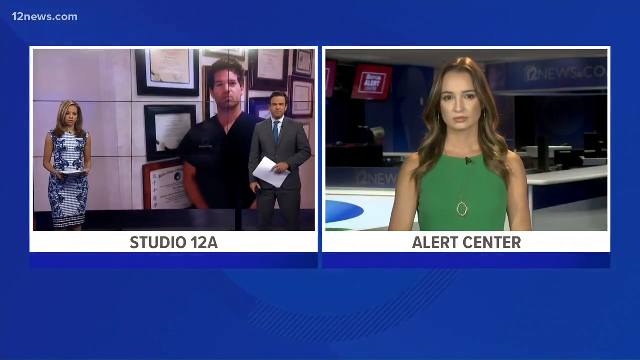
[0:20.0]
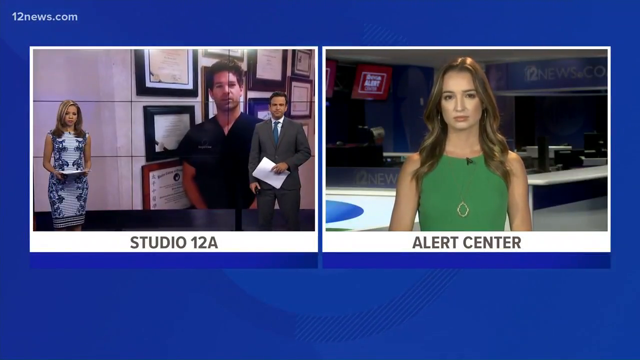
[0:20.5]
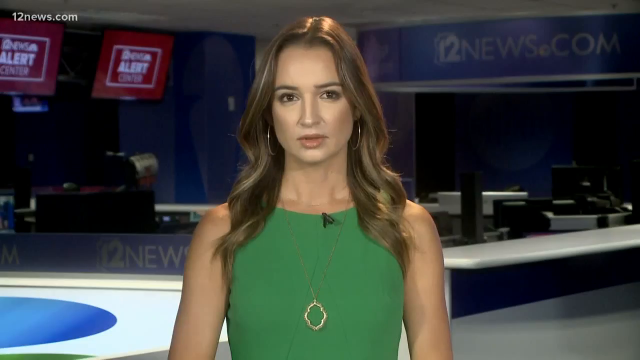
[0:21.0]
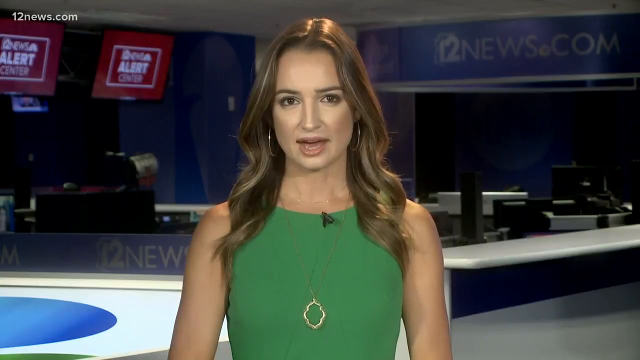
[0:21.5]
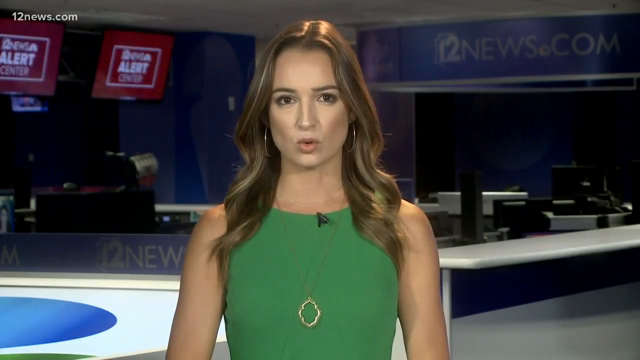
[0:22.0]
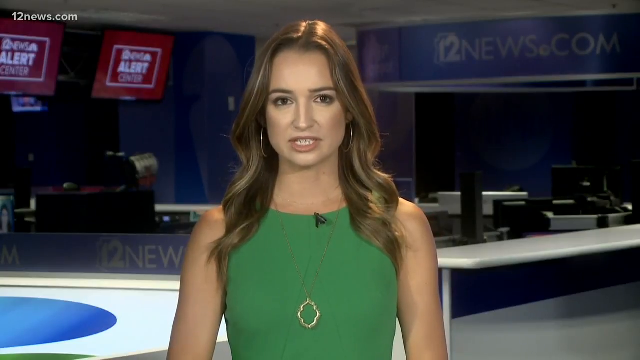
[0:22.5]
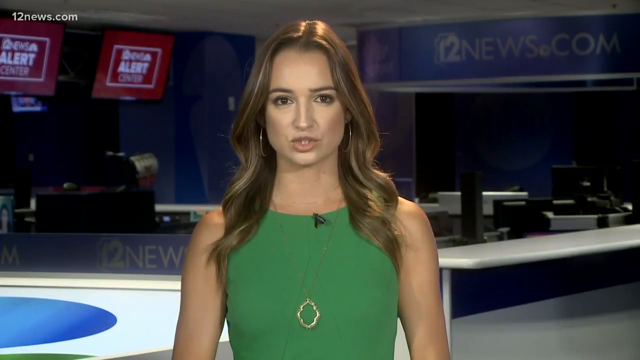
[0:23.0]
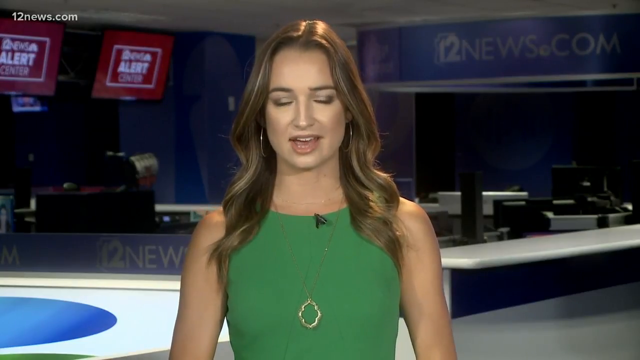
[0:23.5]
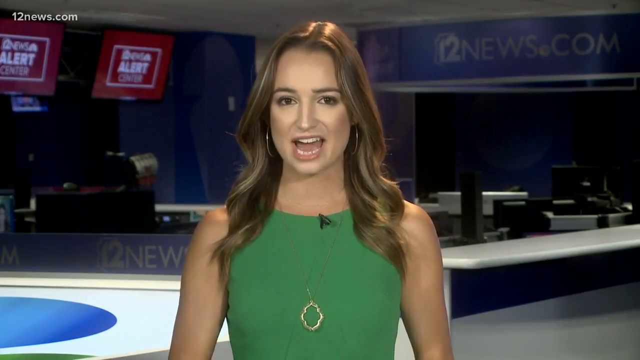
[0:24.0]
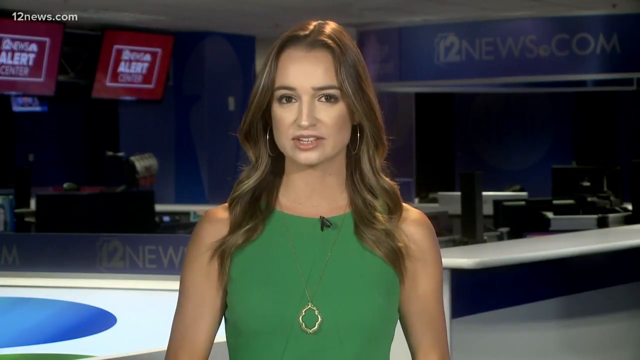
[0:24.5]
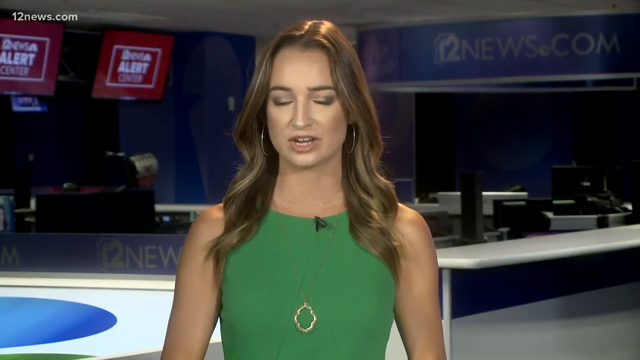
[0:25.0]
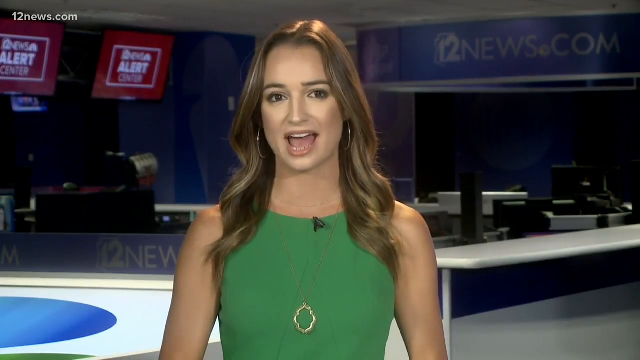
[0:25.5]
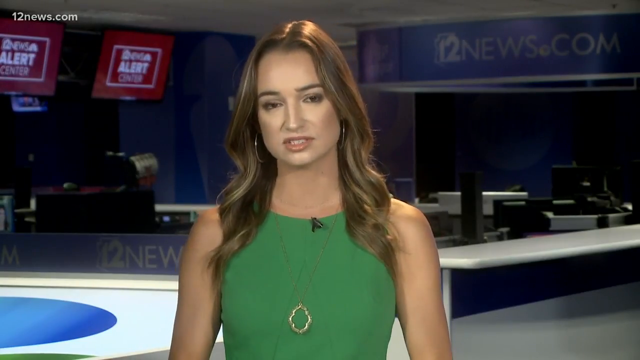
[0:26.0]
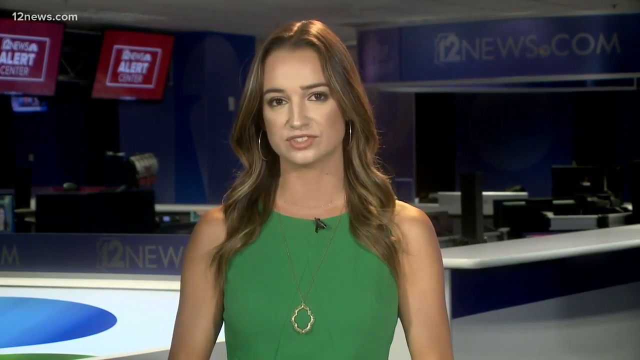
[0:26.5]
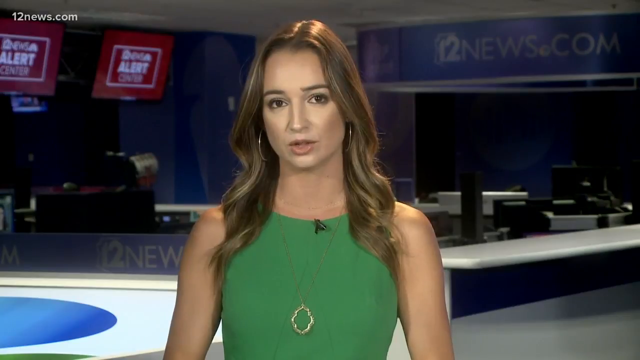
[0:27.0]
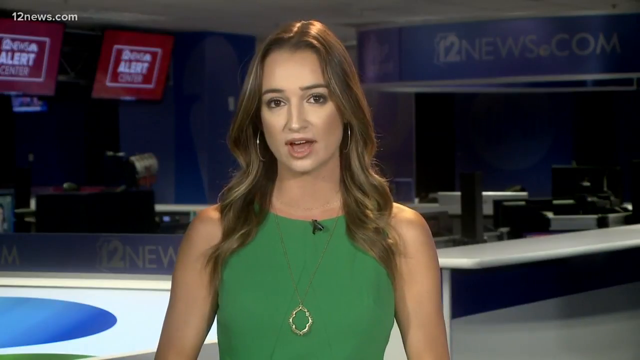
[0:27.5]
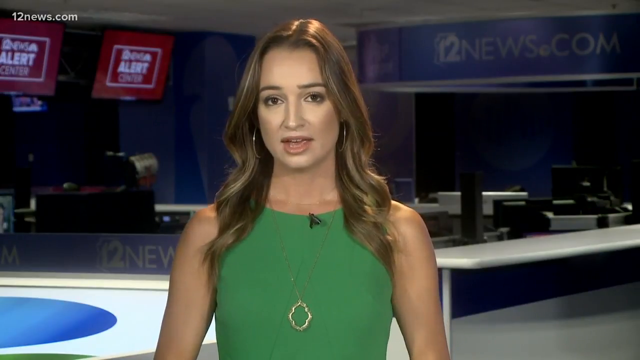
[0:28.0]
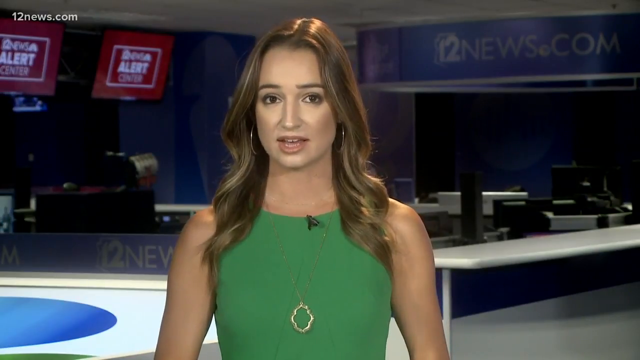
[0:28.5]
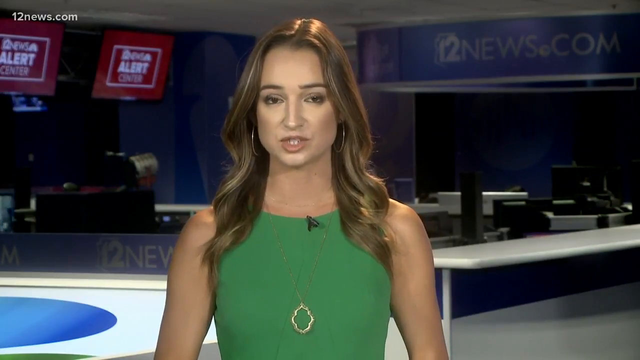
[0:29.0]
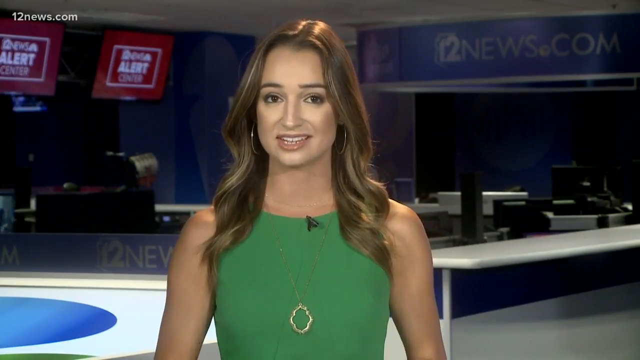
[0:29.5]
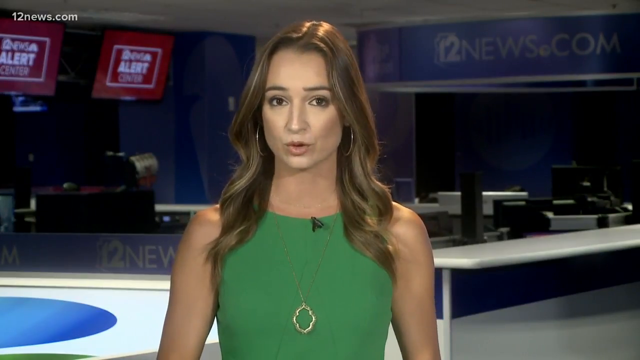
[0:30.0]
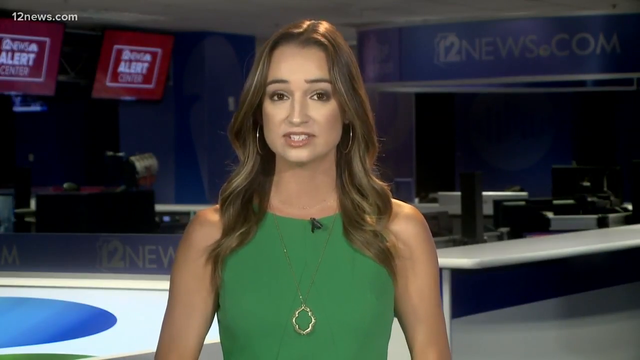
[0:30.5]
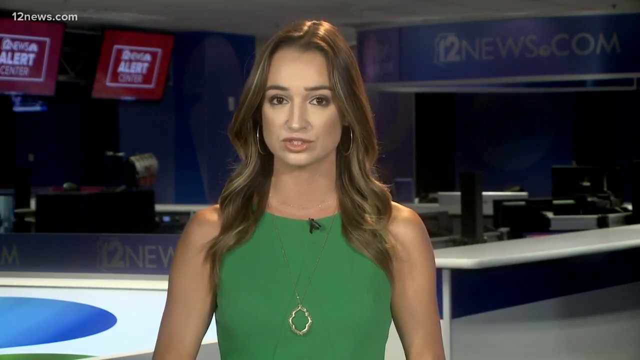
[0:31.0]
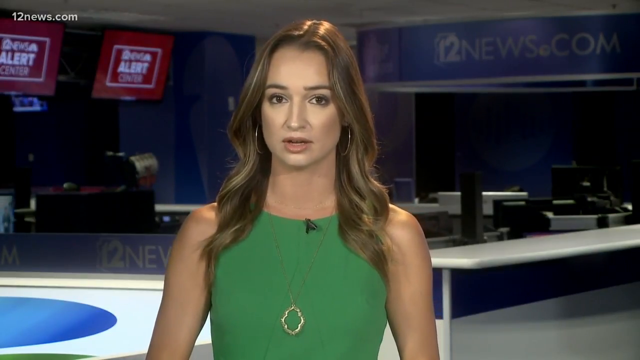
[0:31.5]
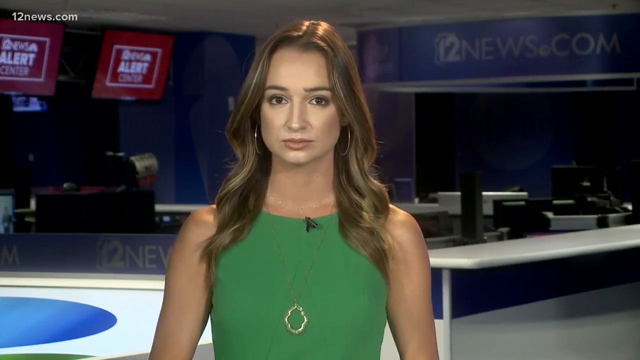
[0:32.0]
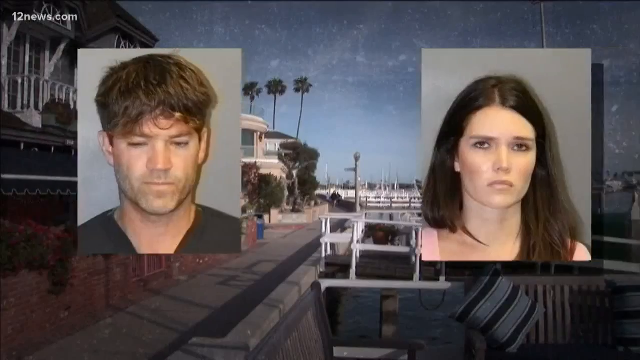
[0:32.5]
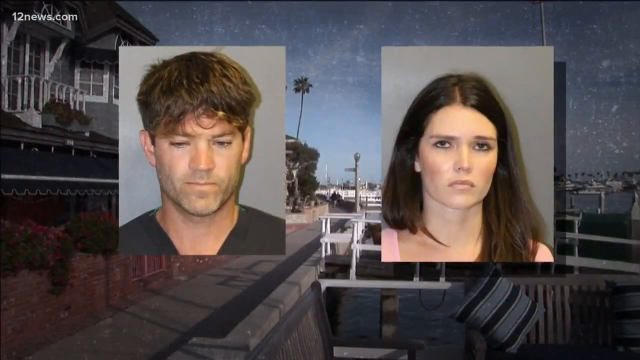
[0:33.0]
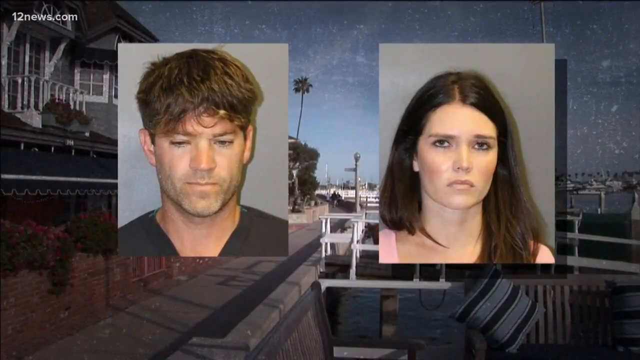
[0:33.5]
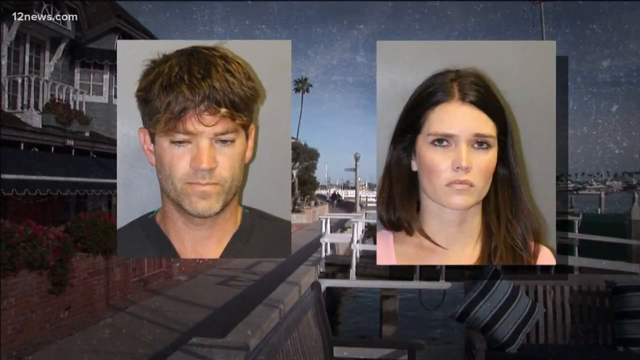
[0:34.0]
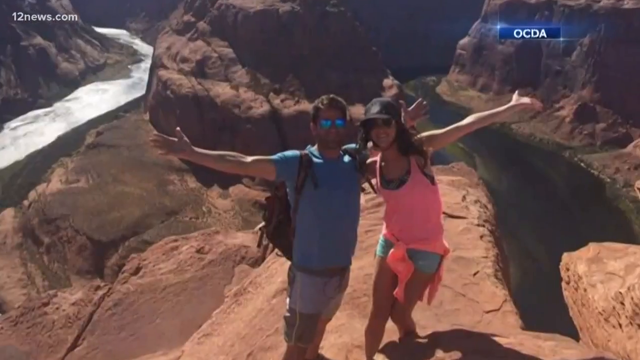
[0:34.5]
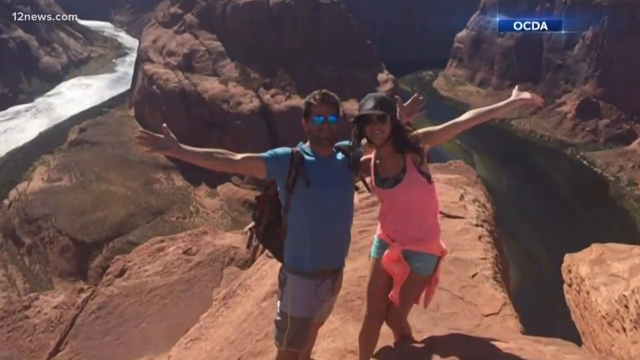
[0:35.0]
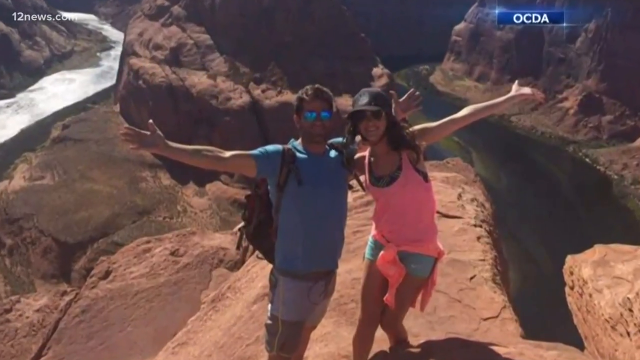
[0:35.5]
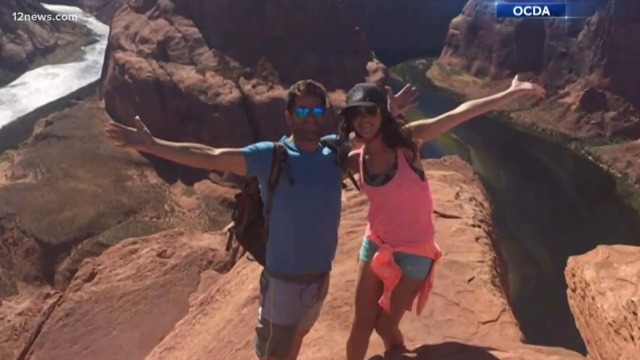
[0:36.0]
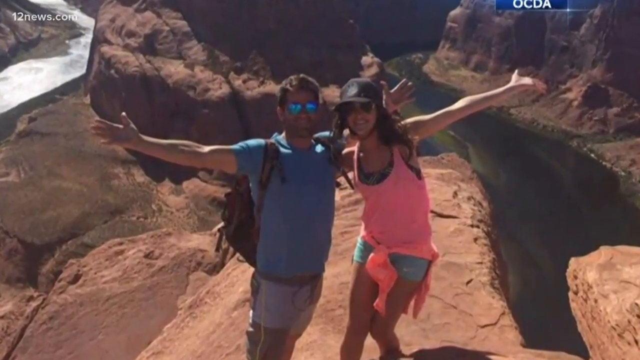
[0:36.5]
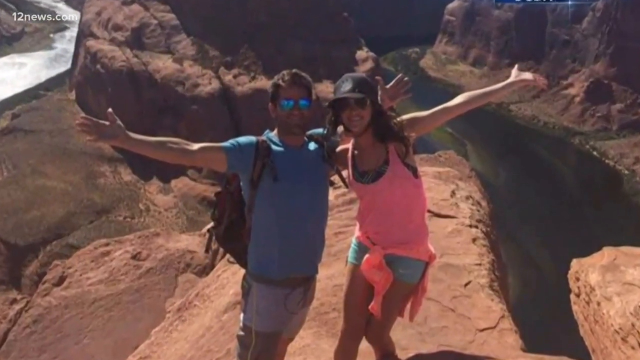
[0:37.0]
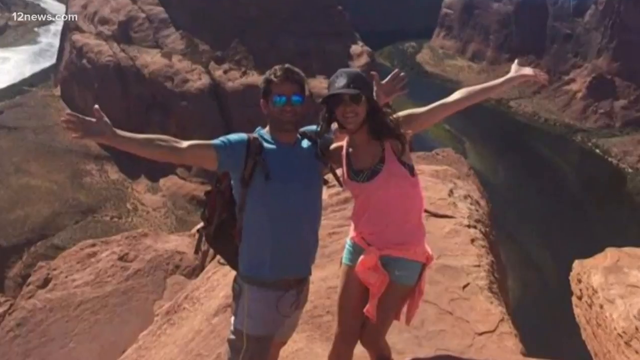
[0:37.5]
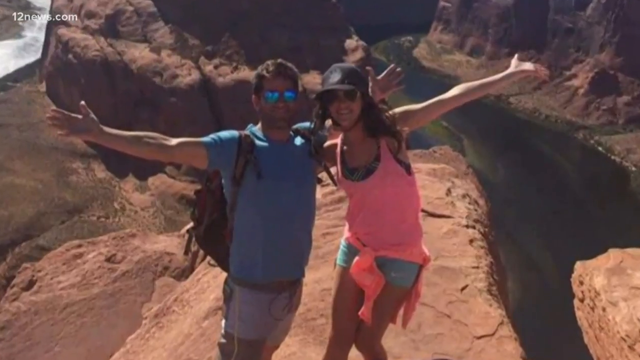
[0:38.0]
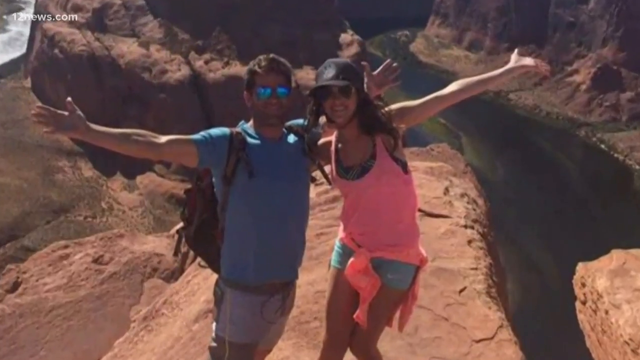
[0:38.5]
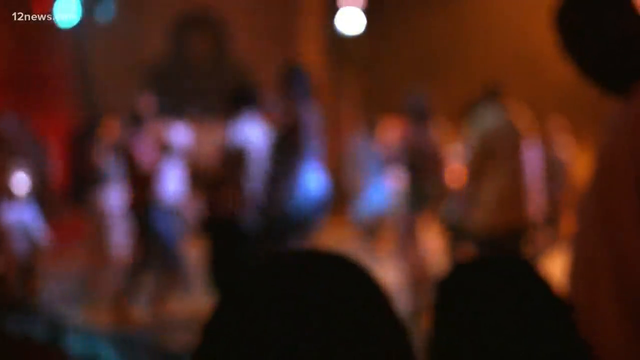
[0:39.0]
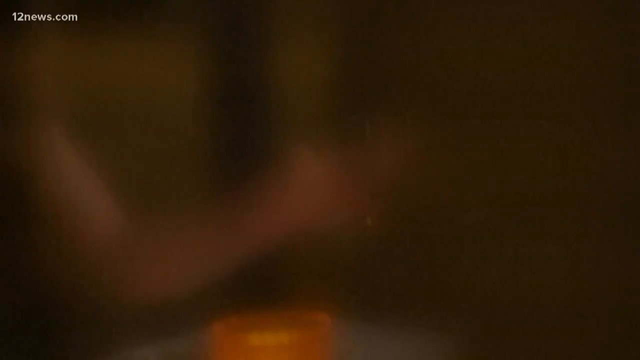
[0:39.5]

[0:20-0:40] At the Alert Center, a reporter in a white dress is shown with "12 news" and ".com" in the background on blue, the "12 news" in white lettering, and "alert" in red on the other side. On the left side is the reporter in a greenish gray suit and blue tie, and a woman anchor in a white dress with bluish flowers on it. Moving footage shows a man on a screen monitor, wearing a black shirt, with dark hair and some awards in the background; "Studio 12A" is at the bottom. A woman reporter in an orange dress speaks; she is white, has brownish hair and wears earrings. Footage then shows the man and a woman in what look like mug shots. Pictures in the center show blue sky, a few clouds, some white structures, trees and a street lamp, with "OCVA" in the upper right corner. Still photos show the man and woman in what looks like a rock area or canyon, with a river or creek on the left side on a sunny day; there is a pink dress and shorts that are kind of lime green. Then the video shows an area where dancing is going on, like a club.